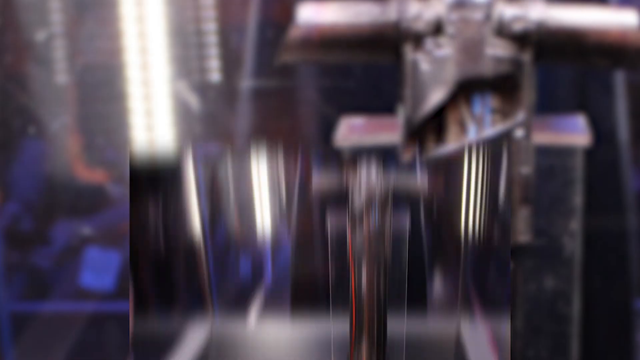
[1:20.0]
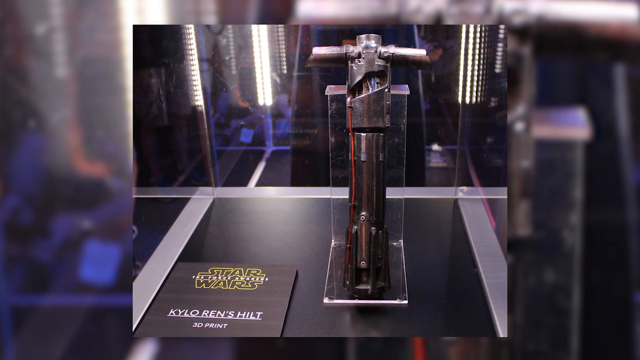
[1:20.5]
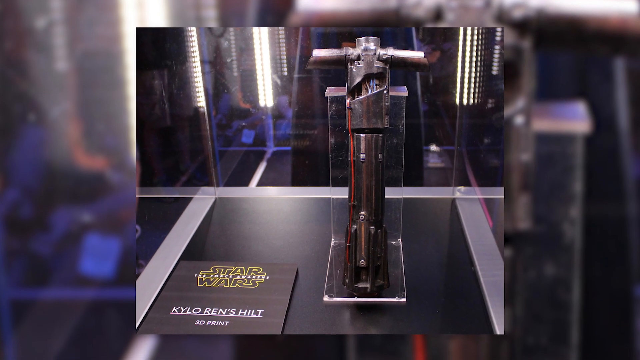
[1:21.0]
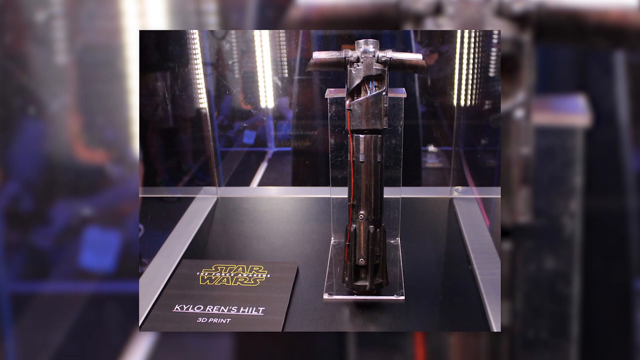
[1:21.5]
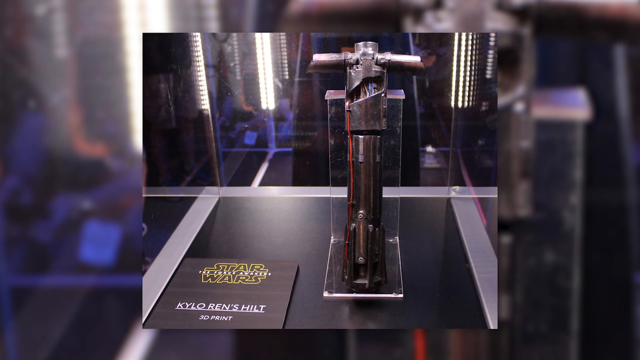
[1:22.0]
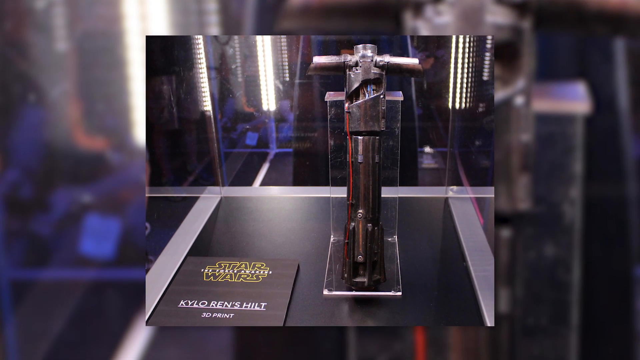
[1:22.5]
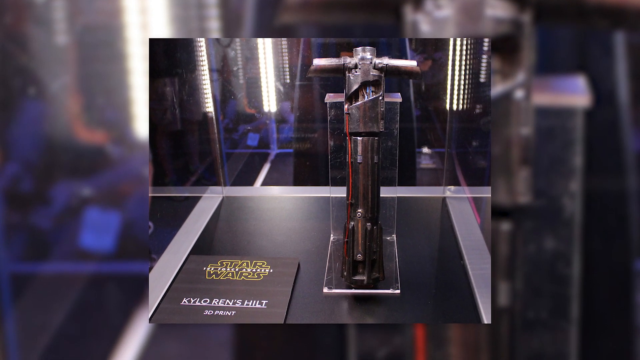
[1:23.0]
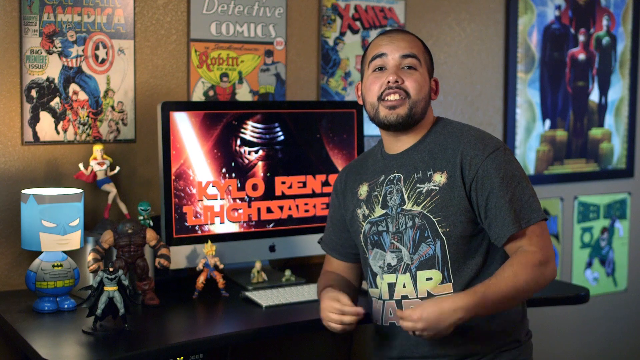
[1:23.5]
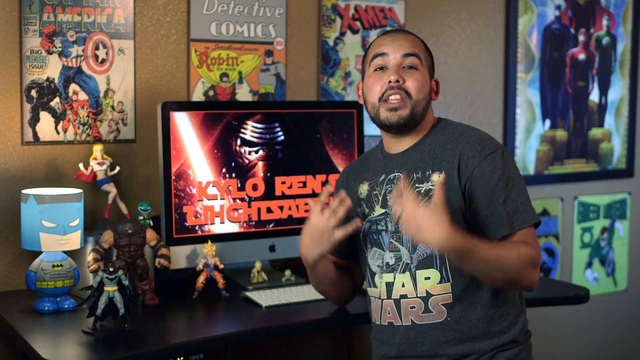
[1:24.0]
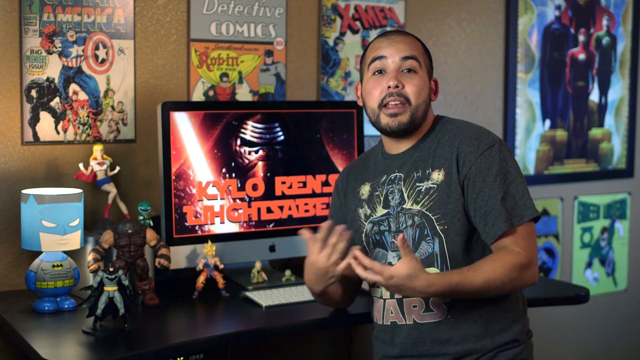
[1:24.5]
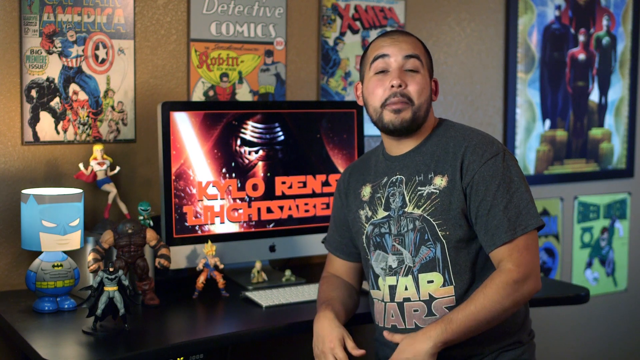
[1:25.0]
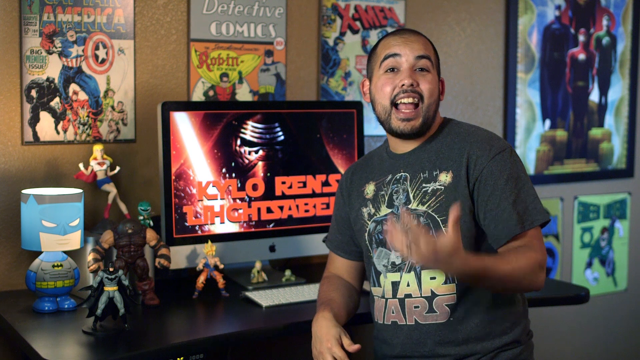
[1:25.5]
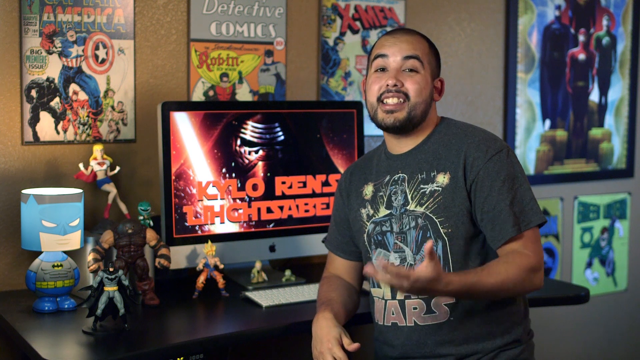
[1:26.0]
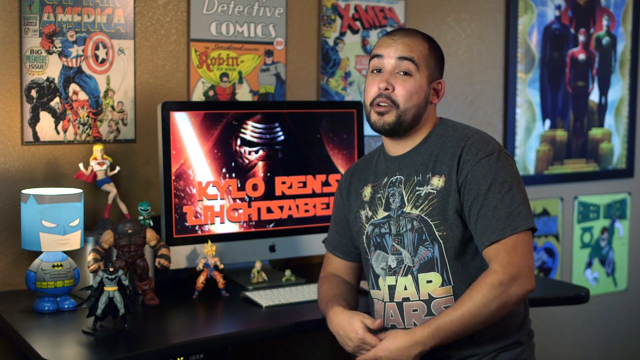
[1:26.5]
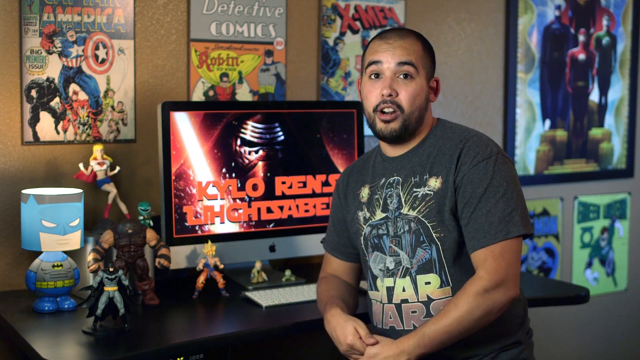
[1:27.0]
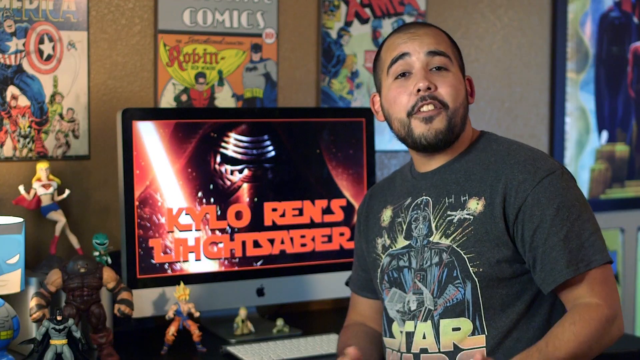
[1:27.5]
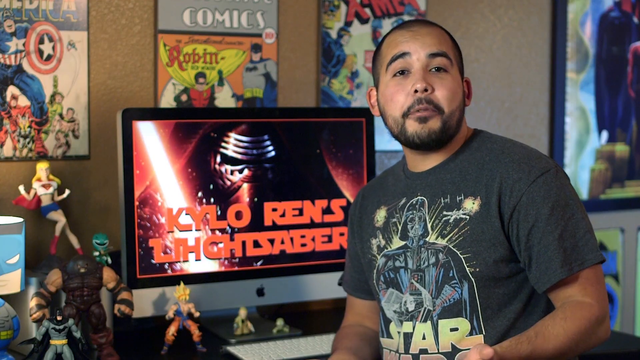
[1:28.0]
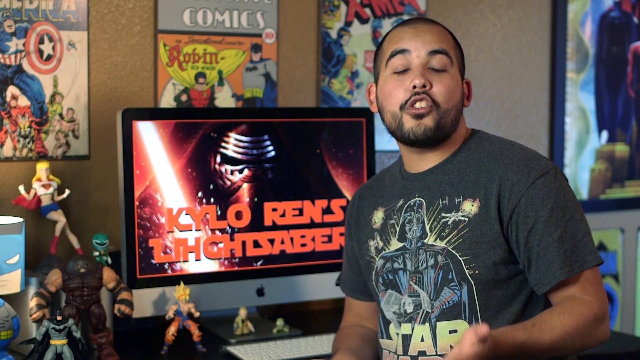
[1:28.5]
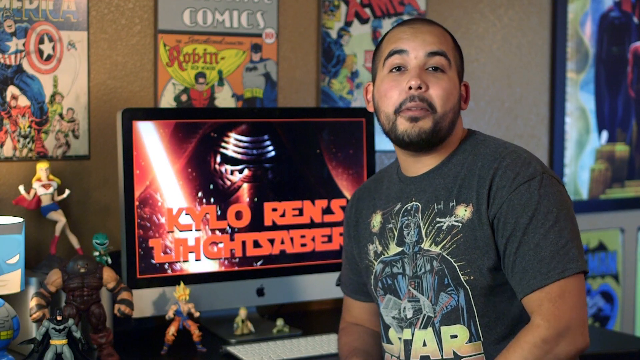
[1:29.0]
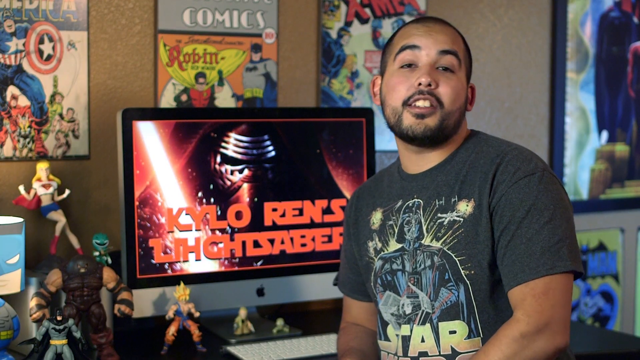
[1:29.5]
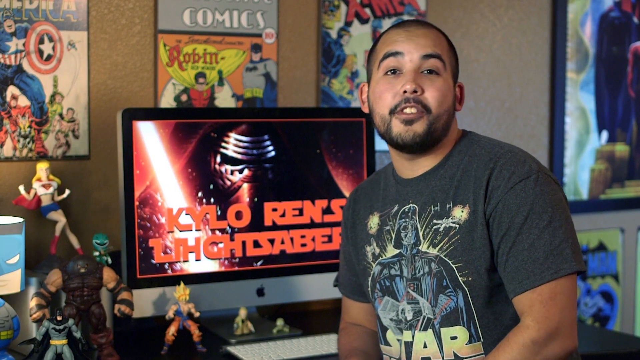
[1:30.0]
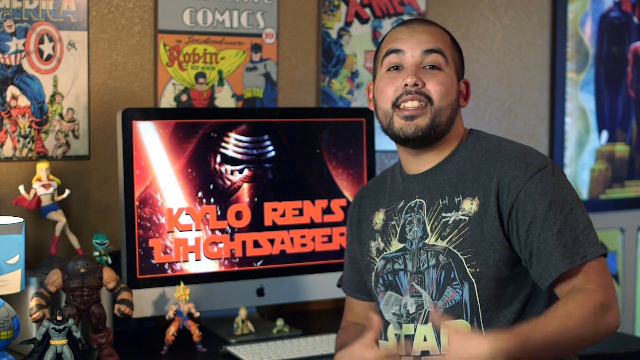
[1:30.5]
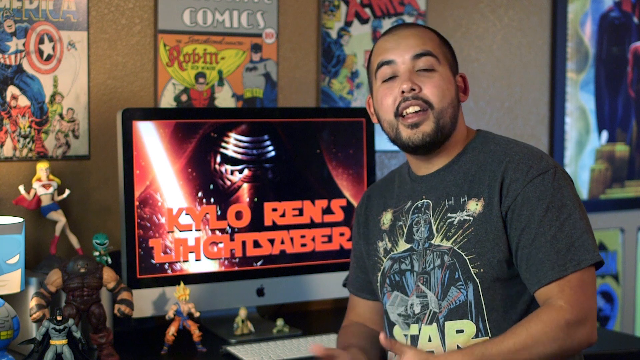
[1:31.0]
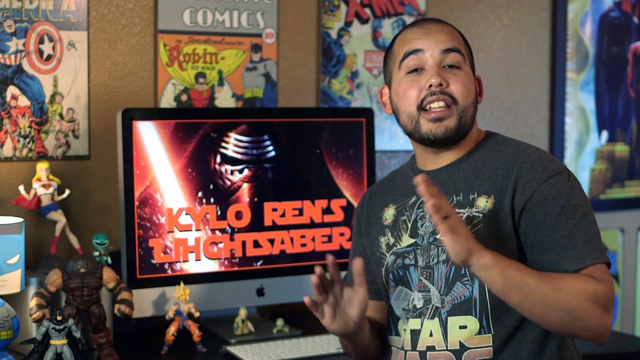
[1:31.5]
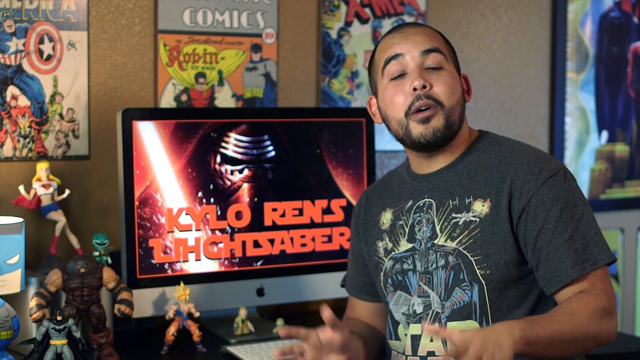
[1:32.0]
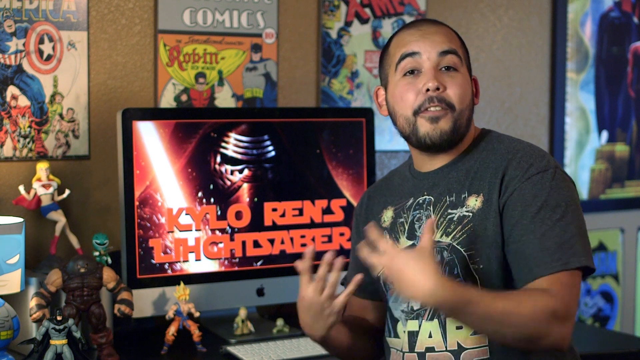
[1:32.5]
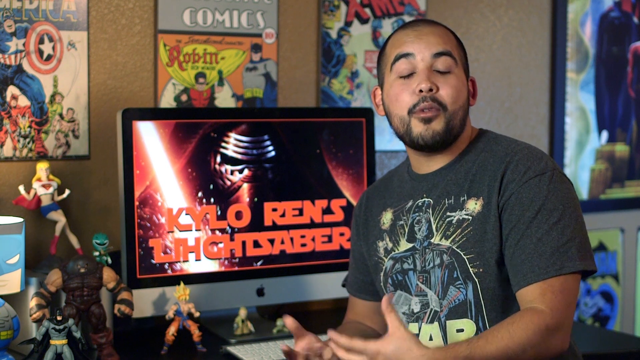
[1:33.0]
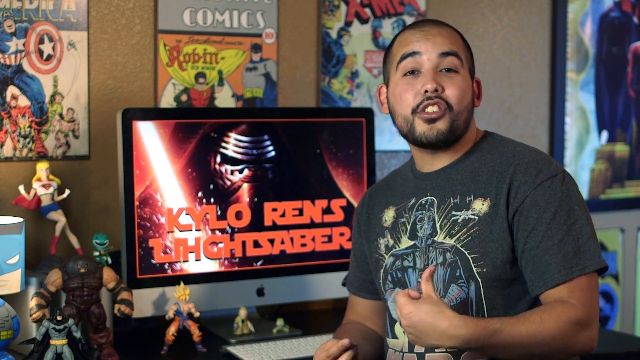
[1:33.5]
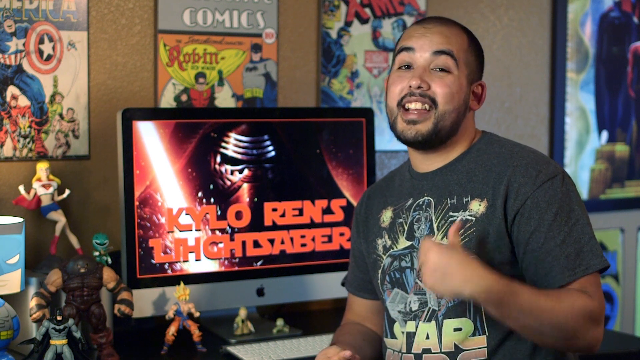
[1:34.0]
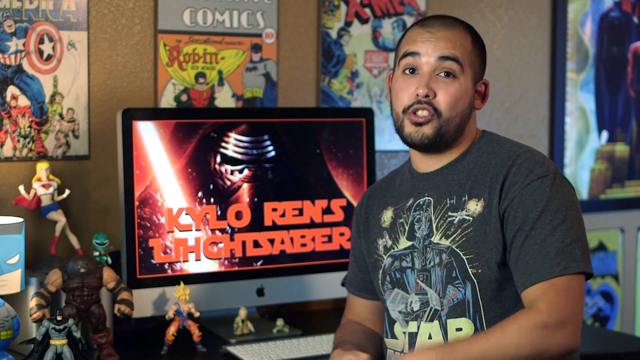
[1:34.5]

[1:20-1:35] The lead title card of this Star Wars-themed YouTube video shows Kylo Ren holding his deployed red lightsaber, wearing his black and silver mask and black hood, with red Star Wars-stylized text over him reading "Kylo Ren's Lightsaber." It was uploaded by Variant Comics, as indicated by the maker flag in the top left: a blue shield with a white border and a white V inside, presented within a blue circle. The video seems to contain images of Star Wars paraphernalia, such as Kylo Ren's lightsaber hilt in a glass display box or museum case. The host is a man with brown skin and short-cropped black hair, wearing a black Star Wars shirt with a cartoon image of Darth Vader. He appears to be in a home office or workspace with tan walls bearing enlarged, framed comic book cover images. The monitor of the Apple computer behind him shows the same Kylo Ren image with the text "Kylo Ren's Lightsaber."